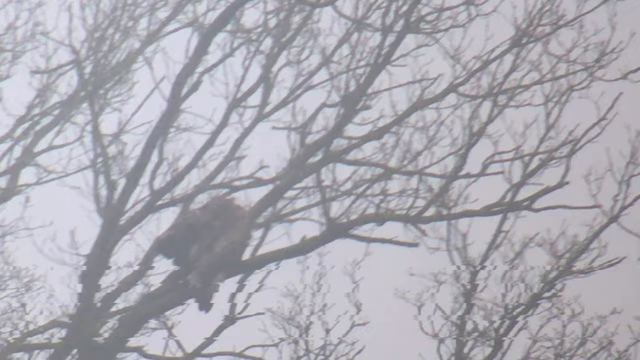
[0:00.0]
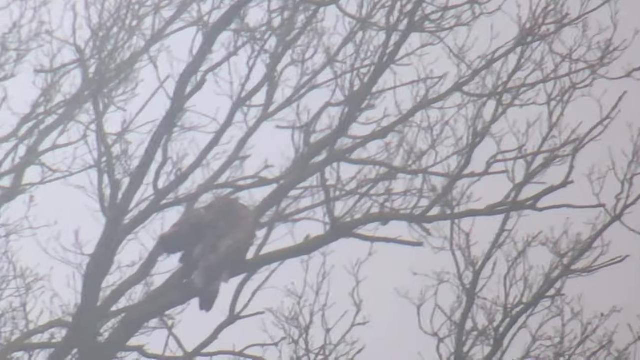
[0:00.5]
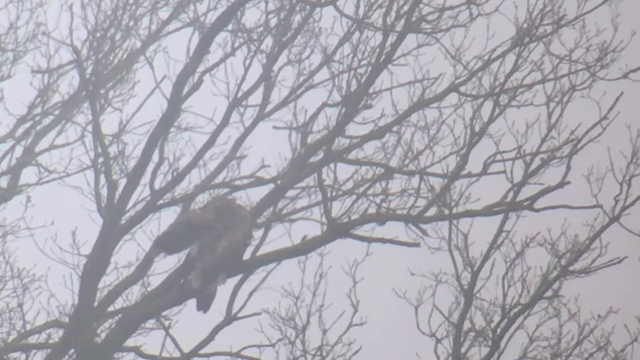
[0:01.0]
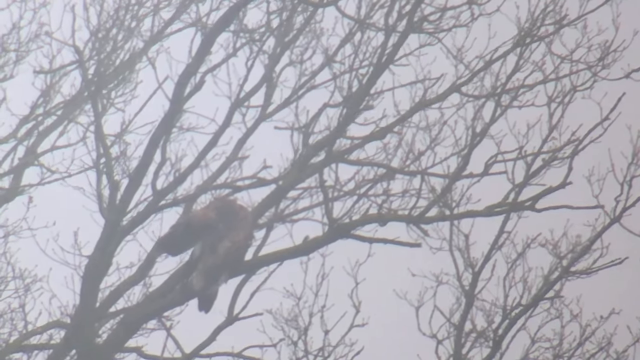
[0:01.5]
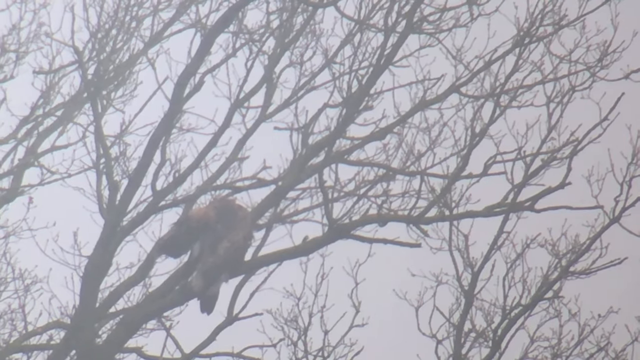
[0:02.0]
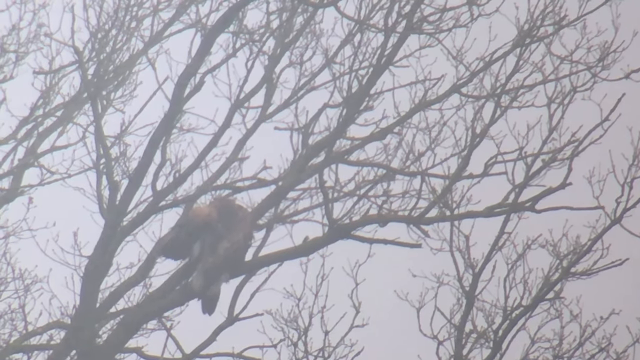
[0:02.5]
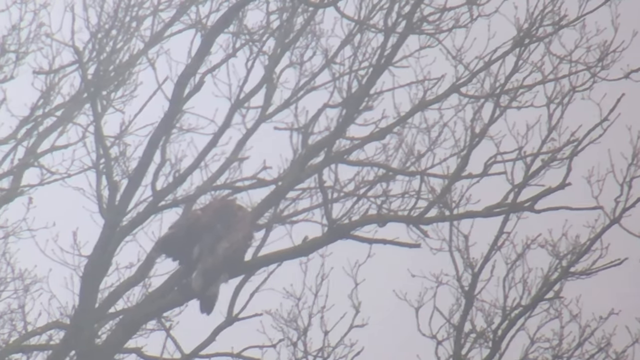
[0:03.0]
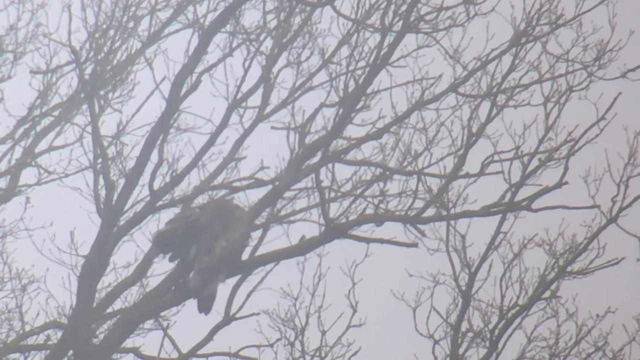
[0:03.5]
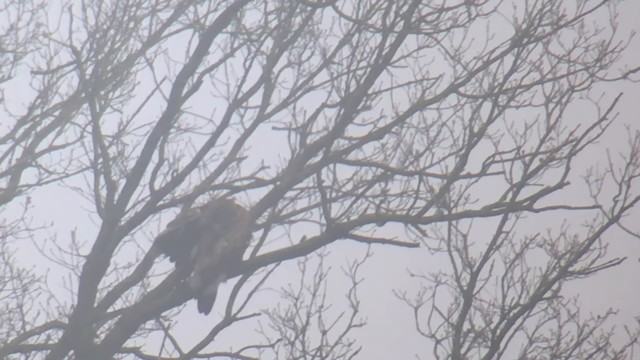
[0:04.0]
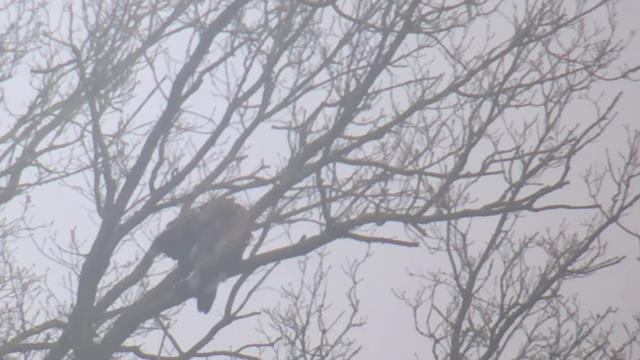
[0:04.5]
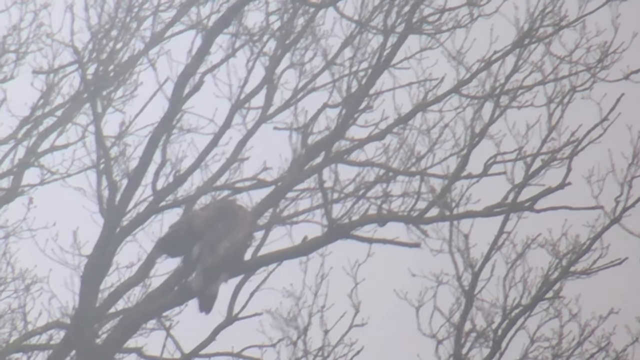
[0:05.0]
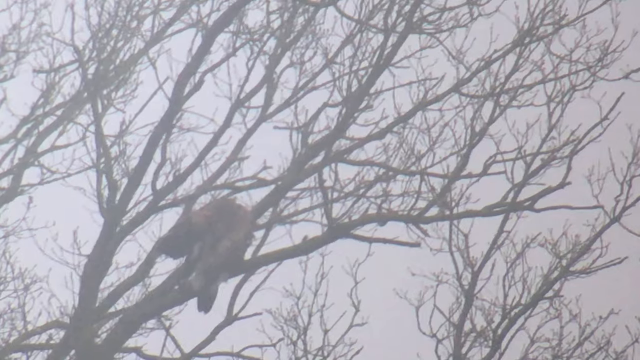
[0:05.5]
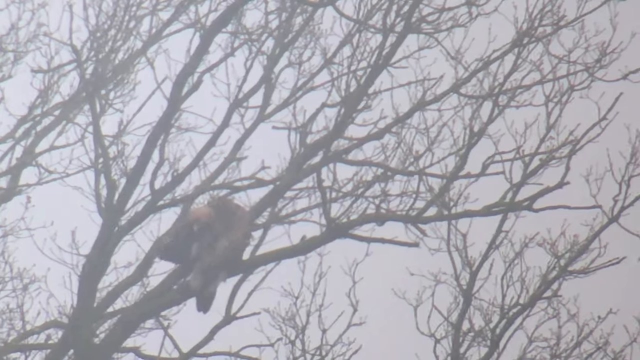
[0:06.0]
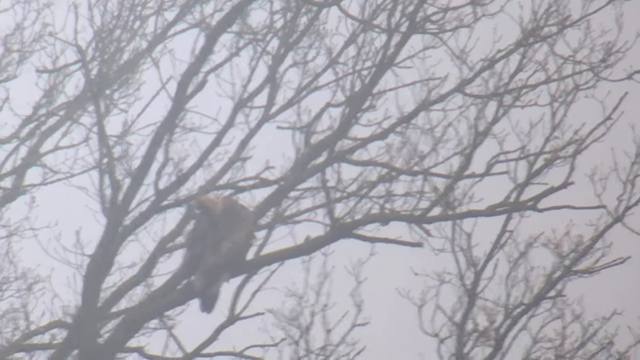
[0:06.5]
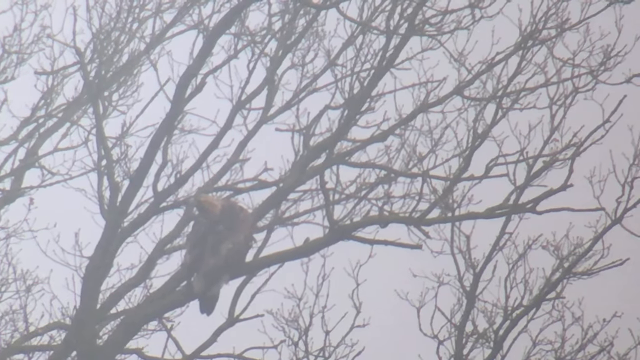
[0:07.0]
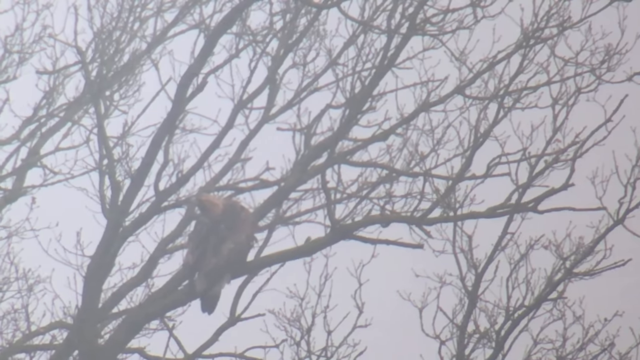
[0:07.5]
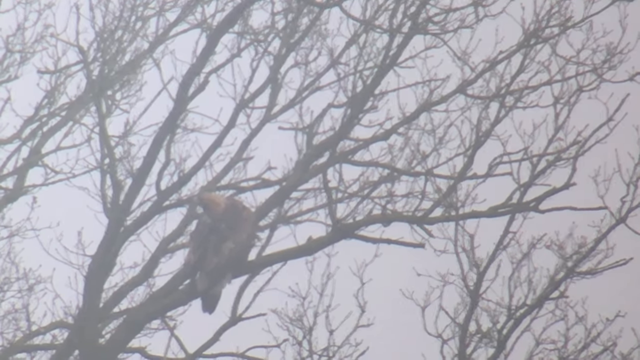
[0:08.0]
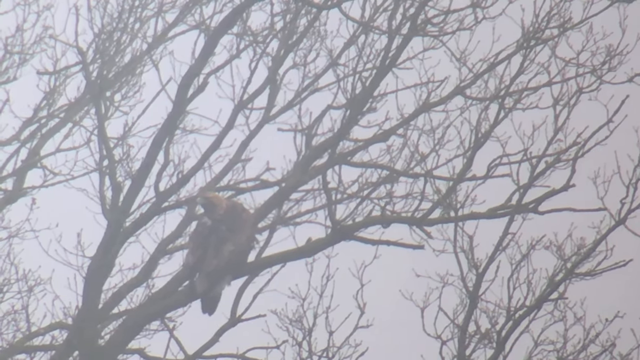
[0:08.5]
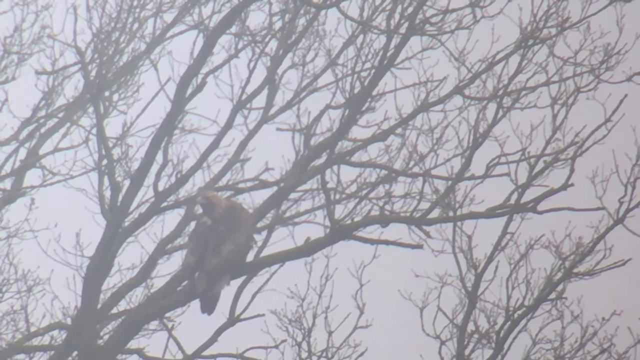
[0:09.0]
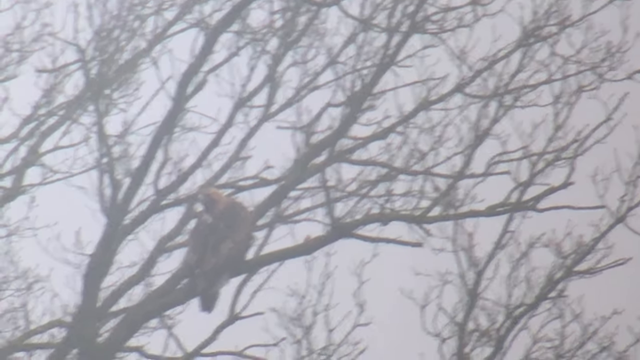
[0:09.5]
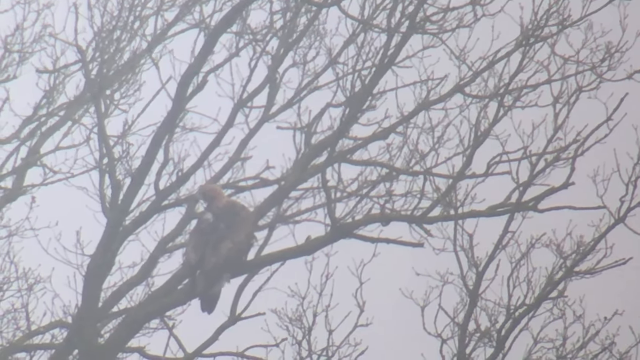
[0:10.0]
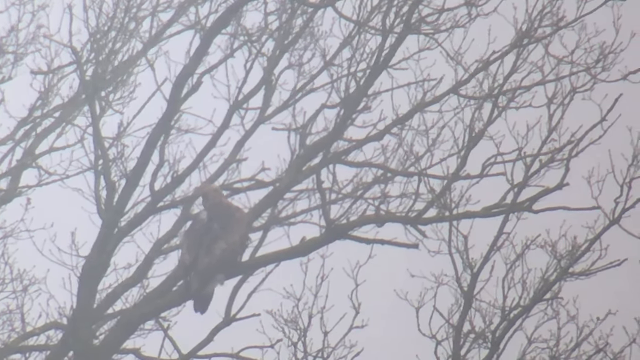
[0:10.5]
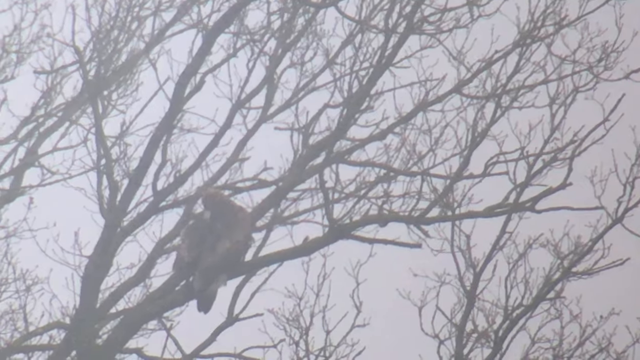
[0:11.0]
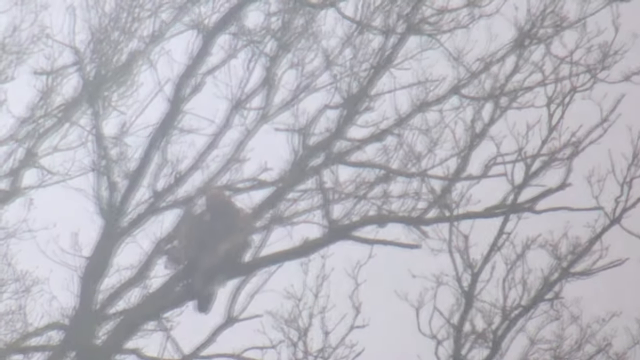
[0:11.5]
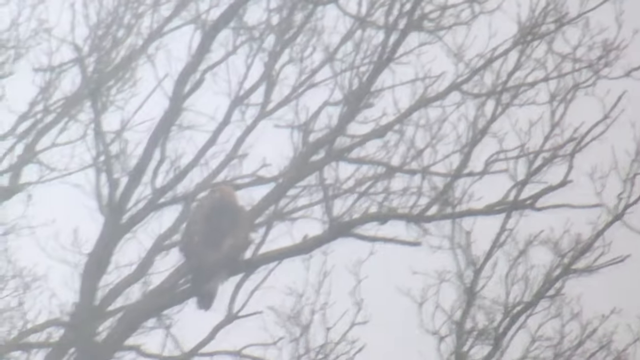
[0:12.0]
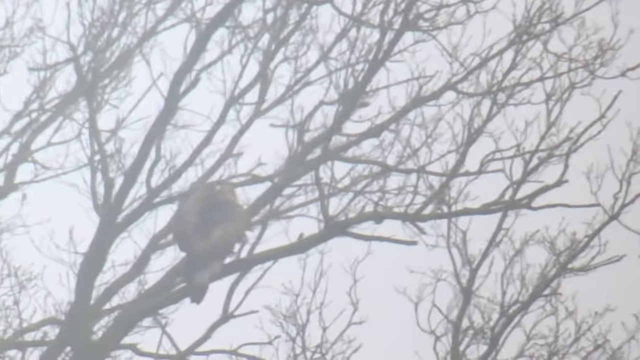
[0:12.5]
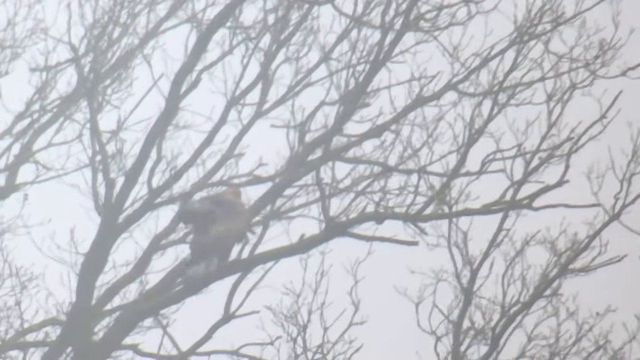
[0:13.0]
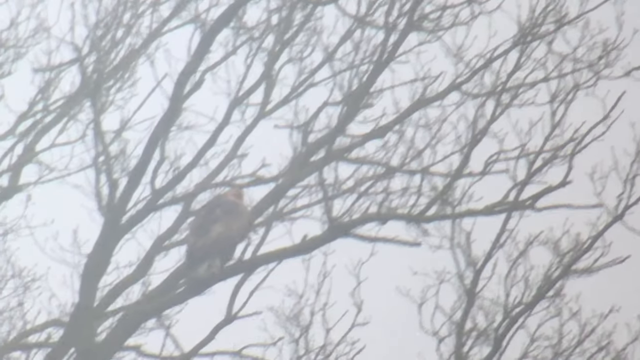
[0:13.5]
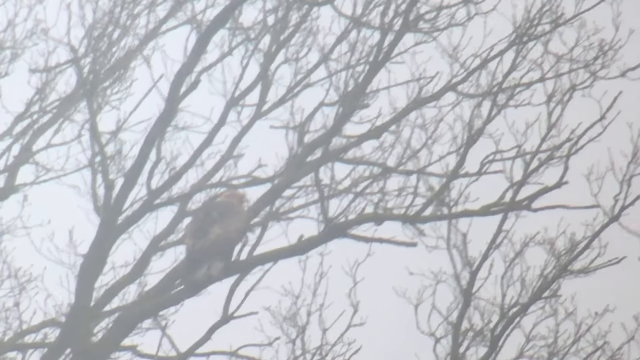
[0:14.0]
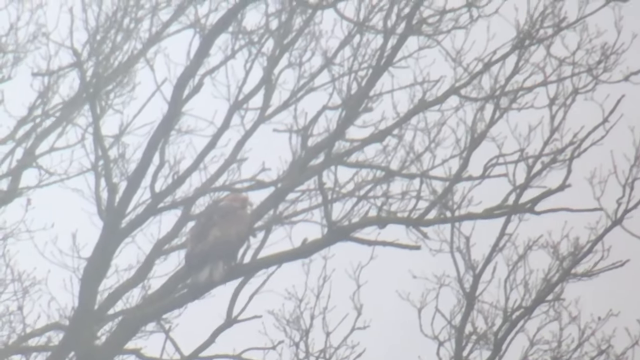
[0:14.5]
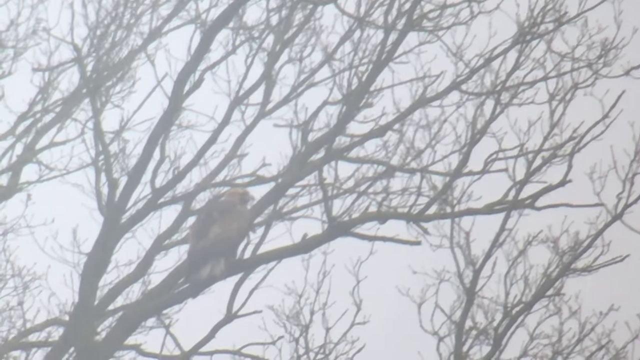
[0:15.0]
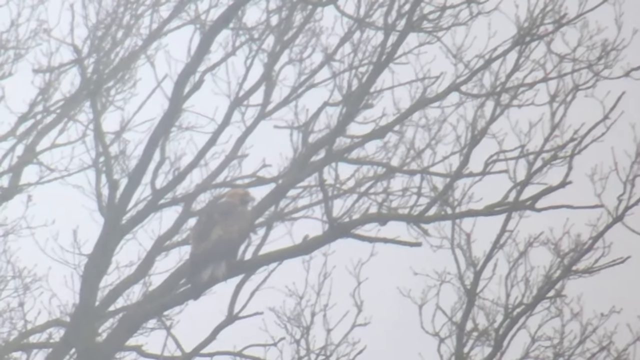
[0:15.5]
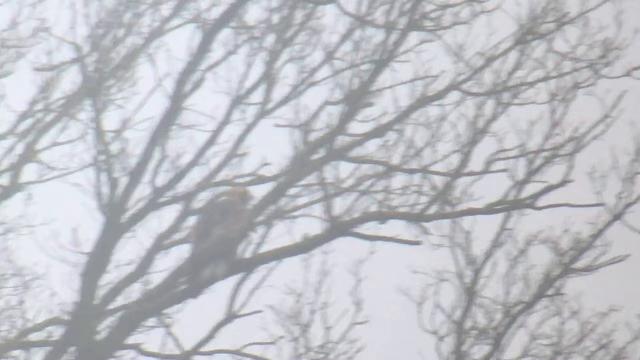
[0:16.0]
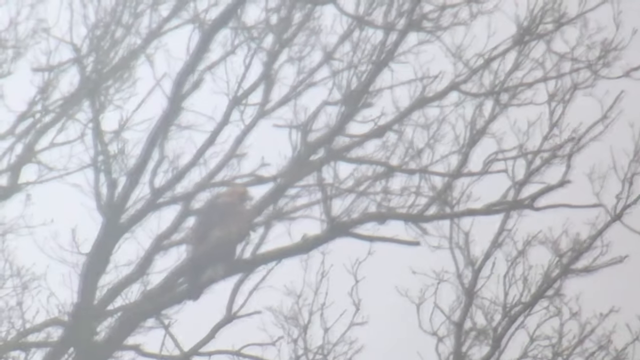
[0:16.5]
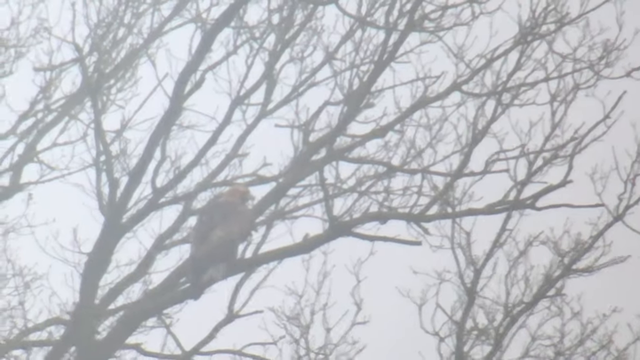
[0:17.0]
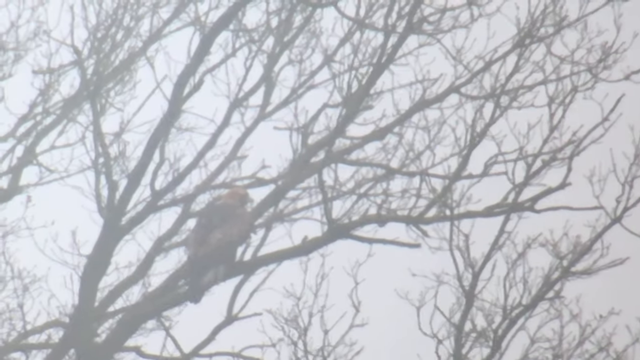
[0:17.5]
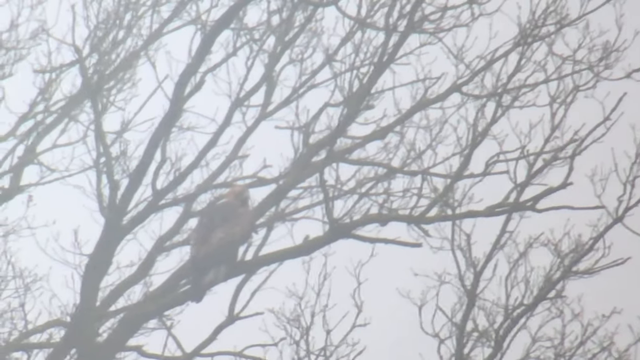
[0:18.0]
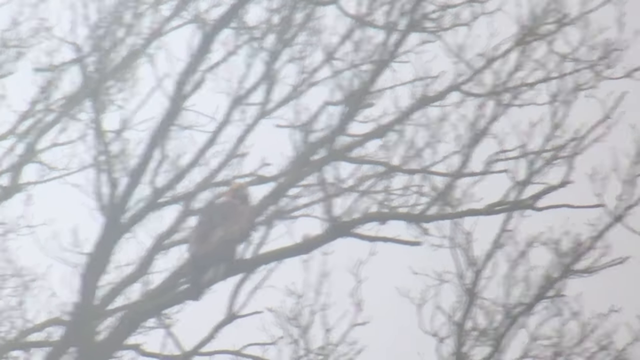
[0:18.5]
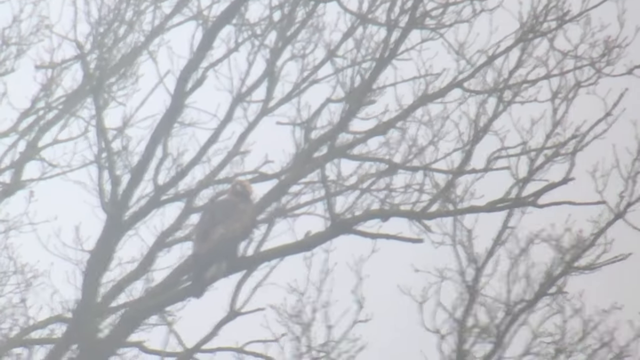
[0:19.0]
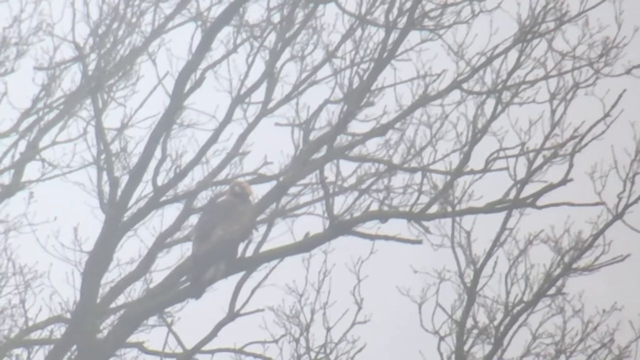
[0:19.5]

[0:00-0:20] A bird, apparently very large, perches in a tree with no leaves, possibly suggesting fall or winter. It is very cloudy outside. The footage is blurry and the bird is barely visible, but it looks huge compared to the branch. It looks brown and may be an eagle. It is the only bird in view. The camera is shaking.